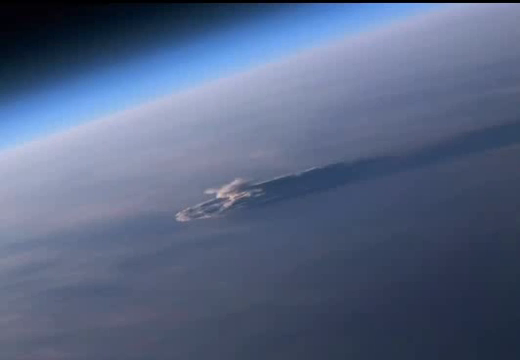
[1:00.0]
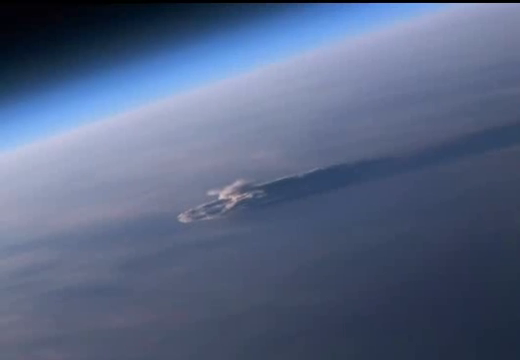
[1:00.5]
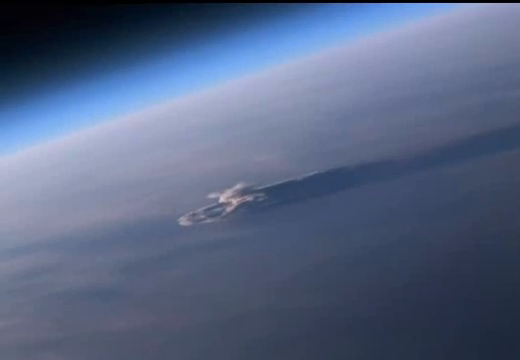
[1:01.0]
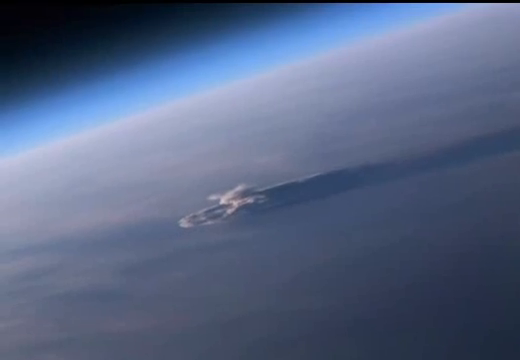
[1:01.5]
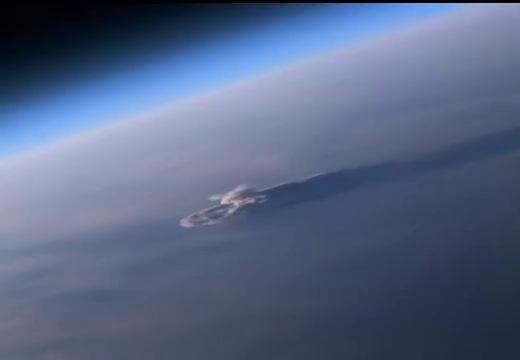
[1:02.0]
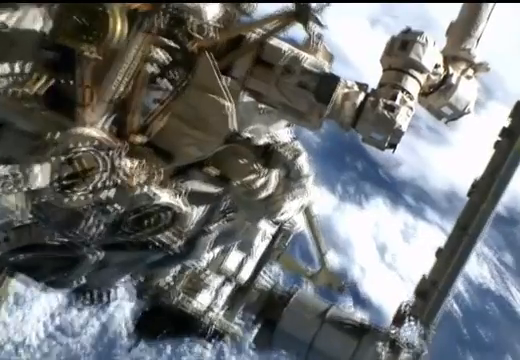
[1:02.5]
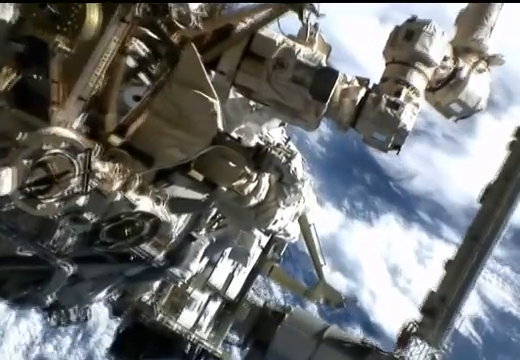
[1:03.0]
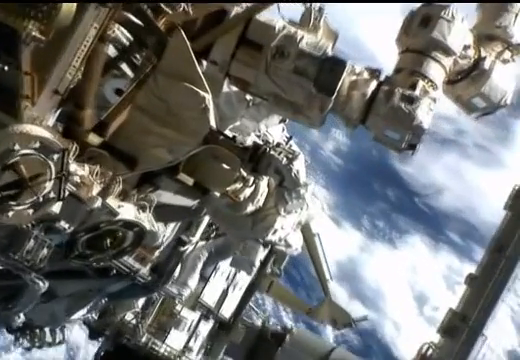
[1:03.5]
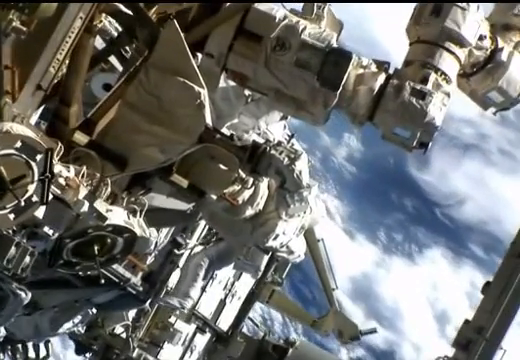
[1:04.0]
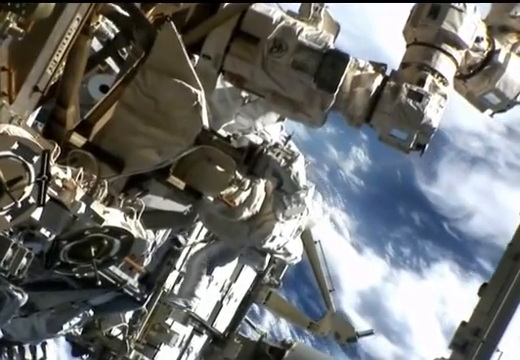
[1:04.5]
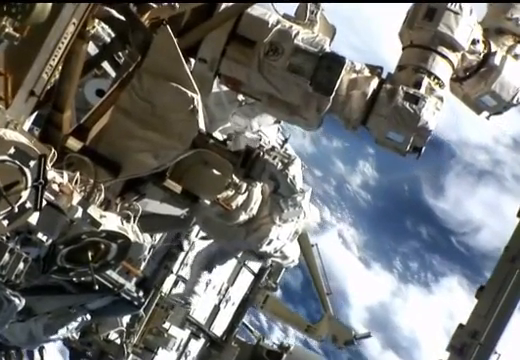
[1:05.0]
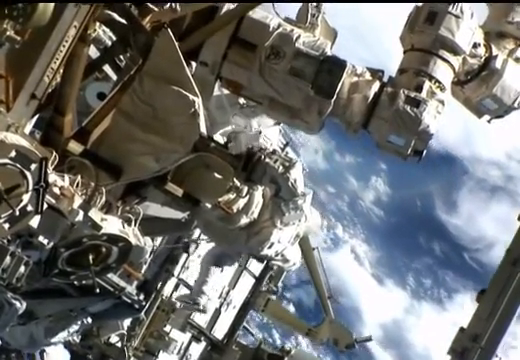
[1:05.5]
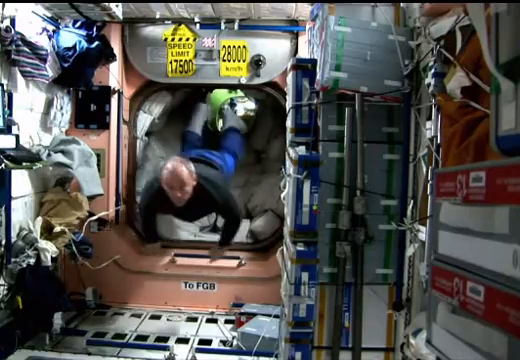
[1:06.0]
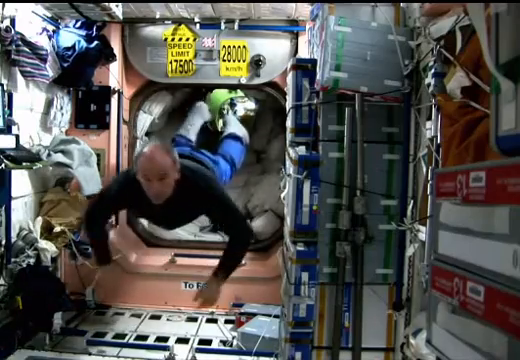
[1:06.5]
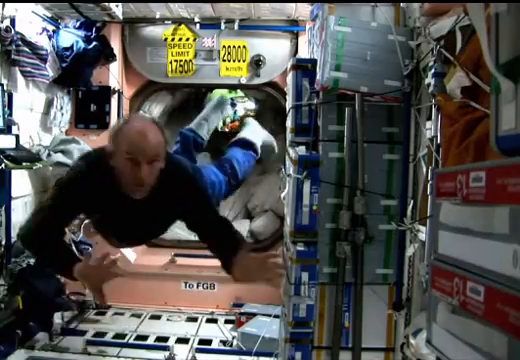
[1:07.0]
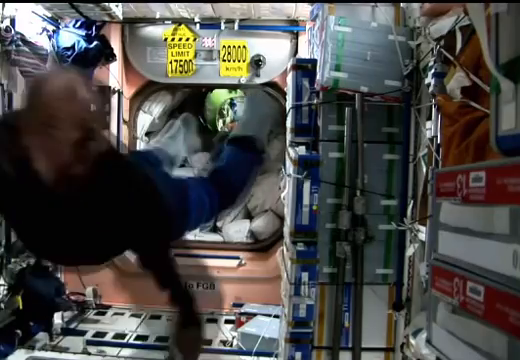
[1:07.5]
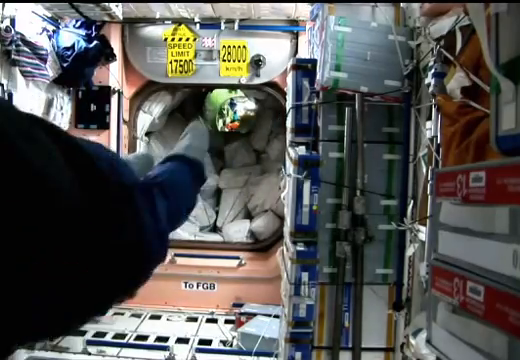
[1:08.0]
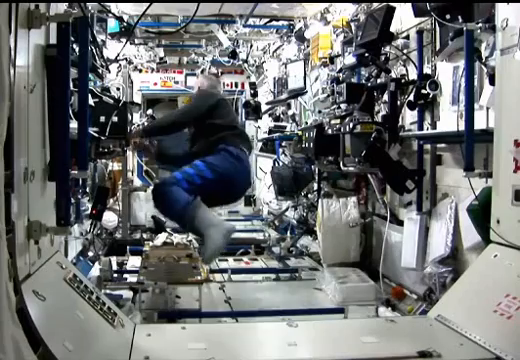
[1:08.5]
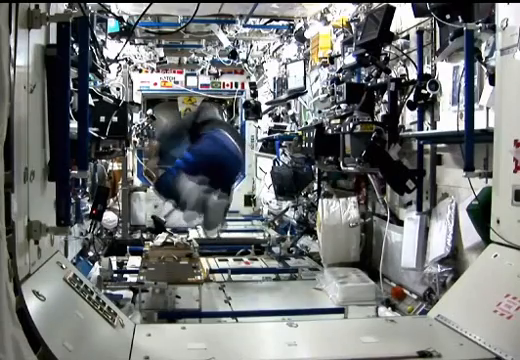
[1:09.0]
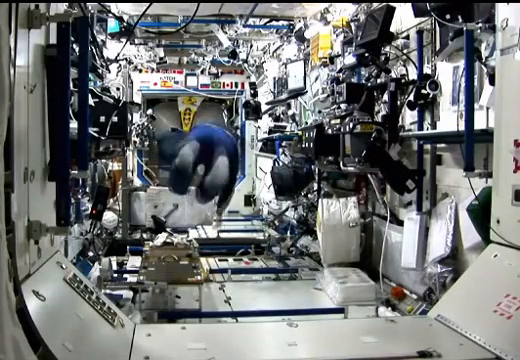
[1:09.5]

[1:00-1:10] The surface shown earlier, mostly gray with a translucent blue outline, appears. A closer angle shows several pipes out in outer space with an astronaut next to them. Next, in an indoor room, a man who appears to be white Caucasian floats; around the room are several wires, shelves and bagged objects. A couple of black and yellow labels read "speed limit 17500 to 8000 km/h." The back side of the floating man is then shown.